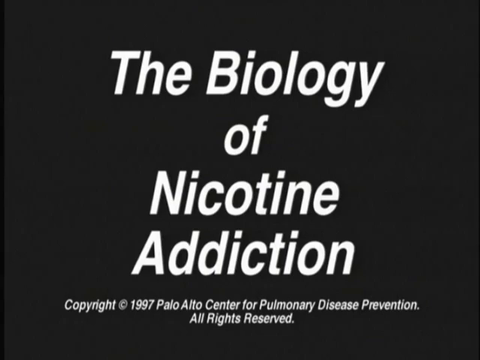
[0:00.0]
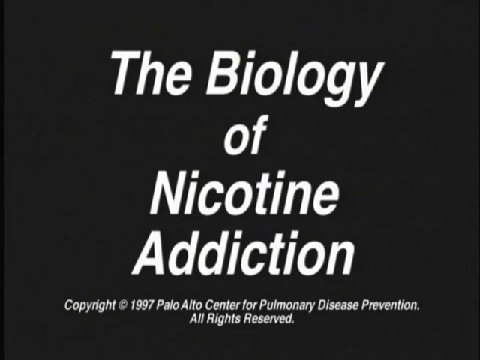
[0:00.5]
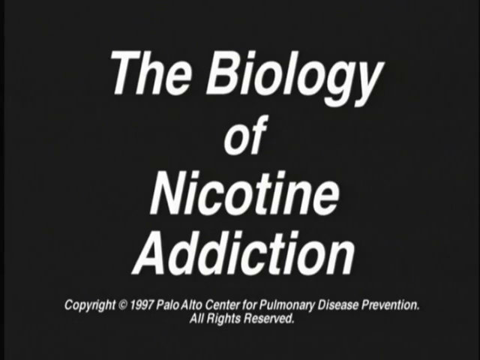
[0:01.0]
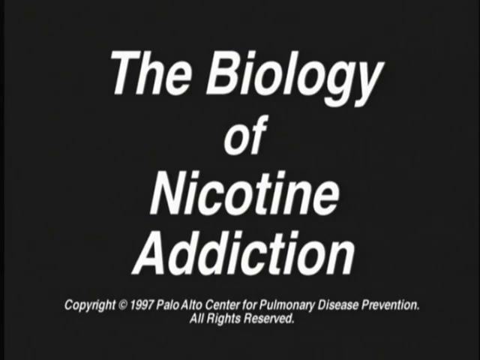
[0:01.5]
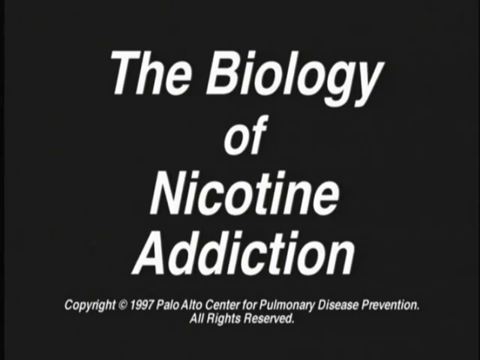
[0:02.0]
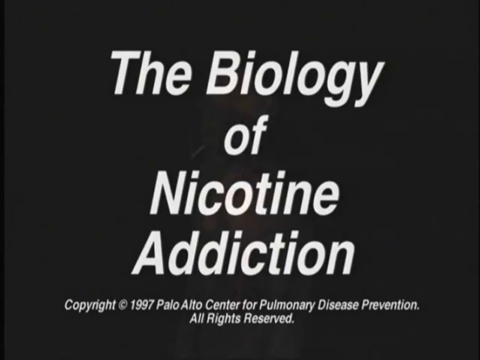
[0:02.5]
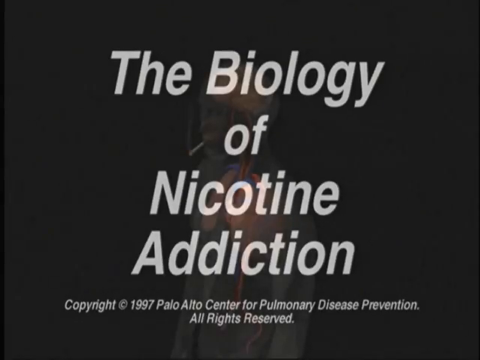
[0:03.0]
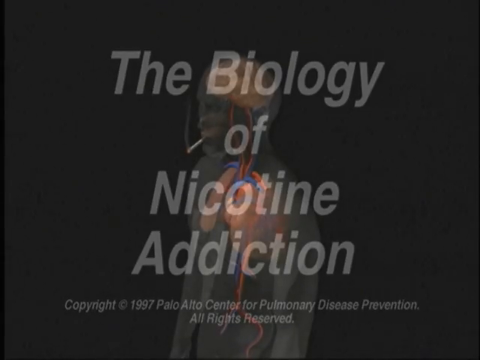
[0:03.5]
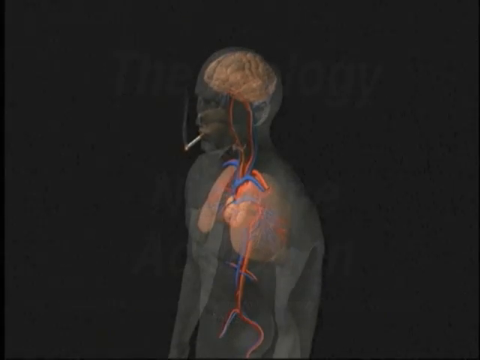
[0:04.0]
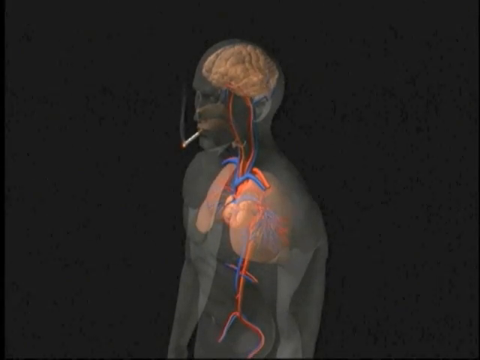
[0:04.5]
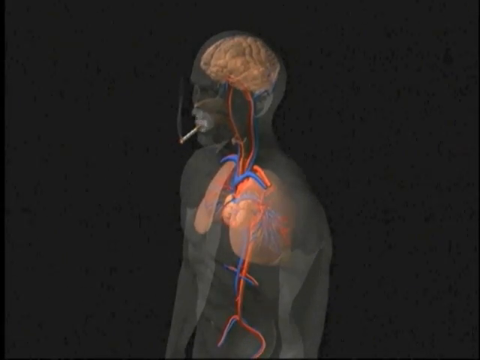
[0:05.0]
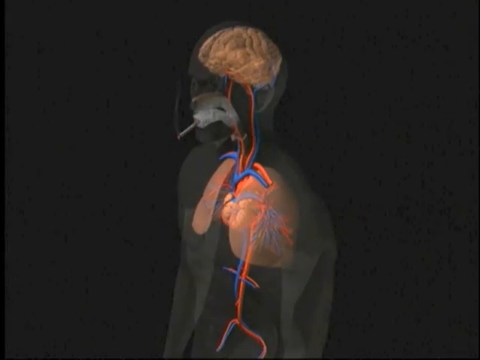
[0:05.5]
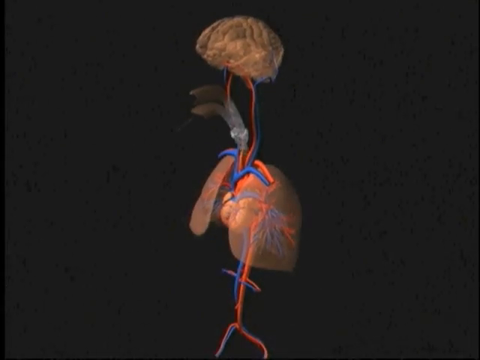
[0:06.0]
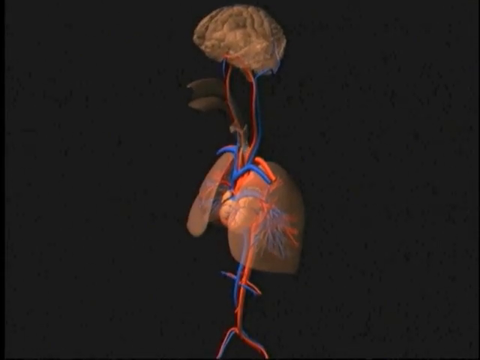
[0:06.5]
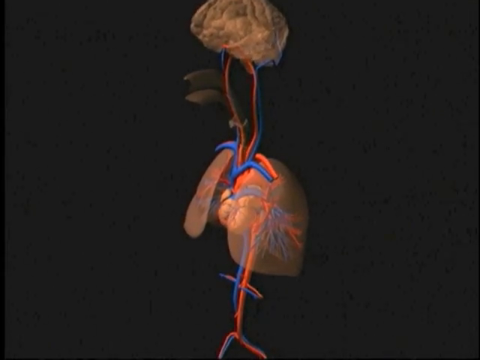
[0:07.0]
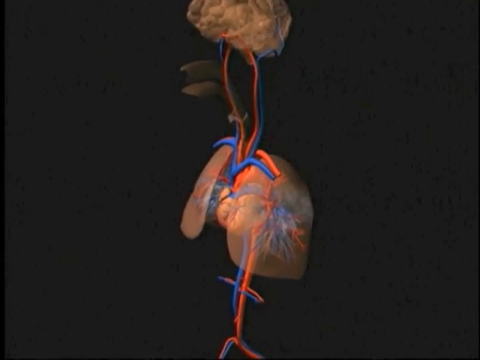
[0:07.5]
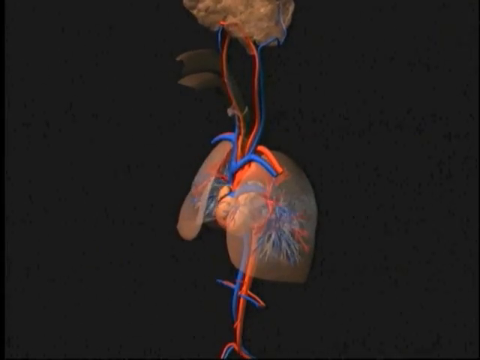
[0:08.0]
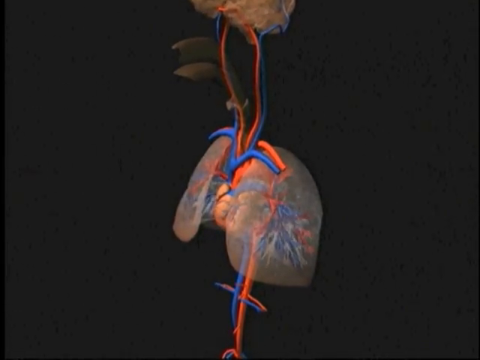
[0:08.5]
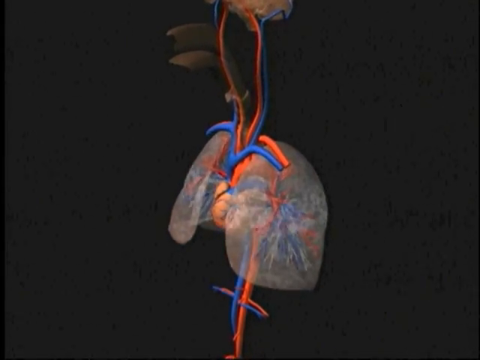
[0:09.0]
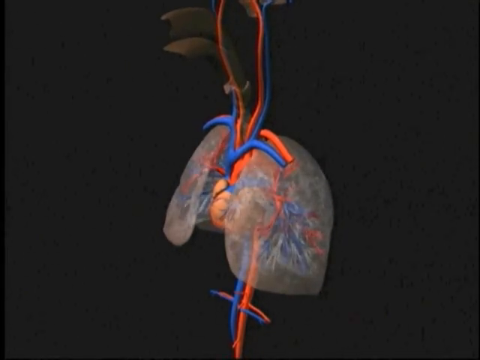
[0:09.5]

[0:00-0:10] An intro appears with the title "the biology of nicotine addiction" along with a copyright notice from 1997. Next comes what looks like a CGI digitally animated demonstration of someone smoking a cigarette. The person's organs are visible, sort of like an x-ray view of a CGI human on a gray background, and the smoke goes down the throat into the lungs and clouds them up, apparently illustrating the effects of nicotine and smoking on the body. The sequence stops right after the smoke fills the lungs.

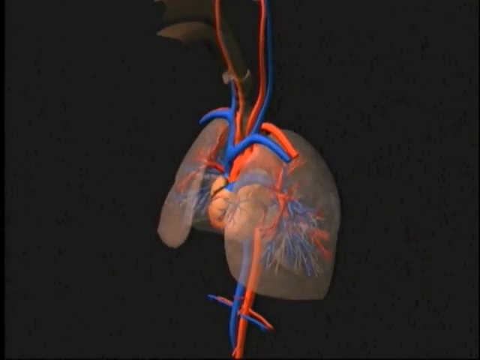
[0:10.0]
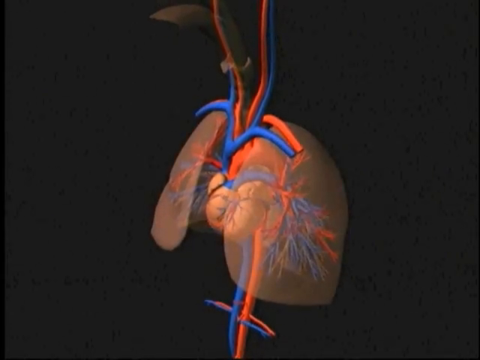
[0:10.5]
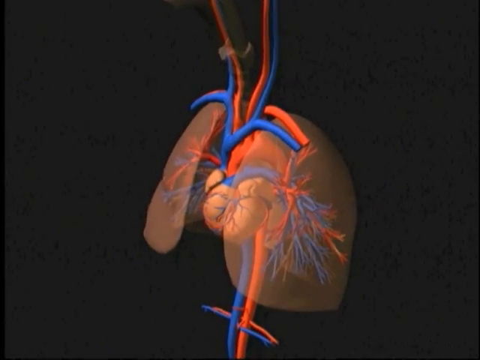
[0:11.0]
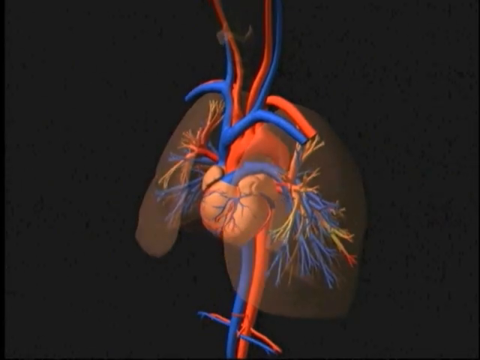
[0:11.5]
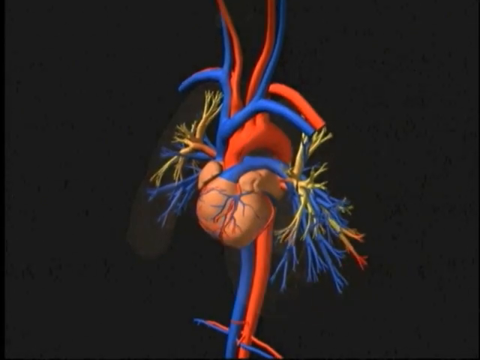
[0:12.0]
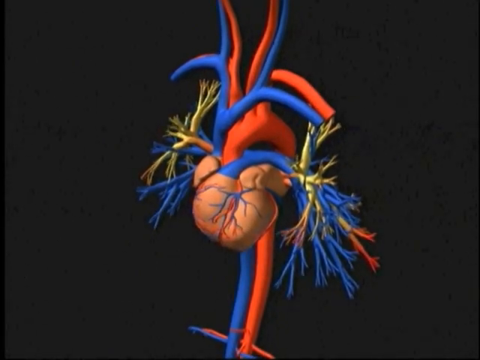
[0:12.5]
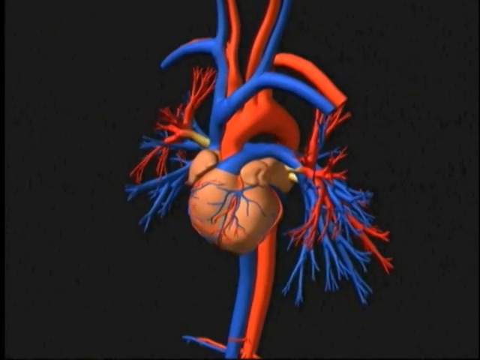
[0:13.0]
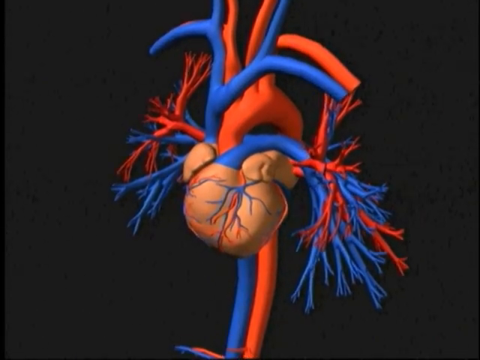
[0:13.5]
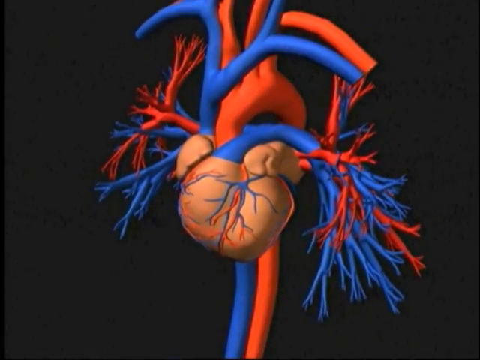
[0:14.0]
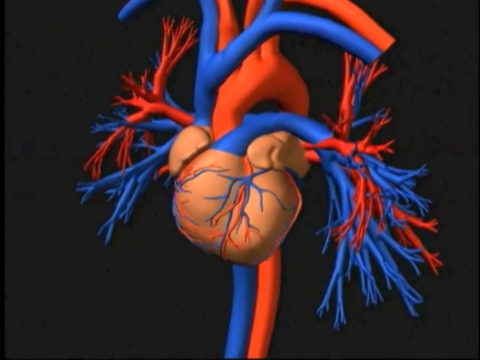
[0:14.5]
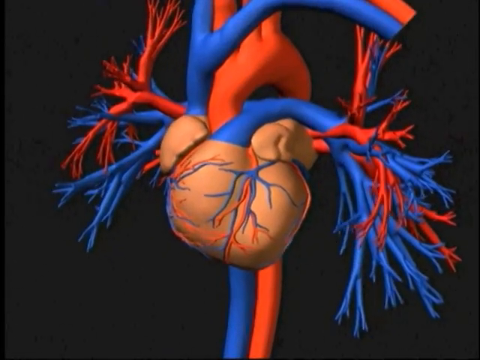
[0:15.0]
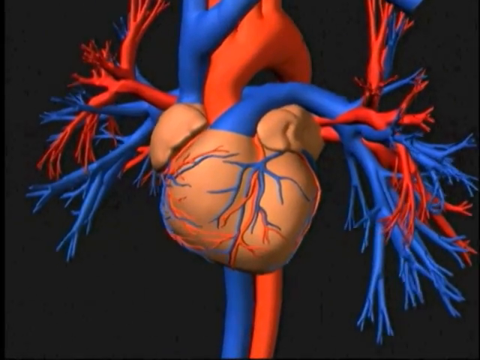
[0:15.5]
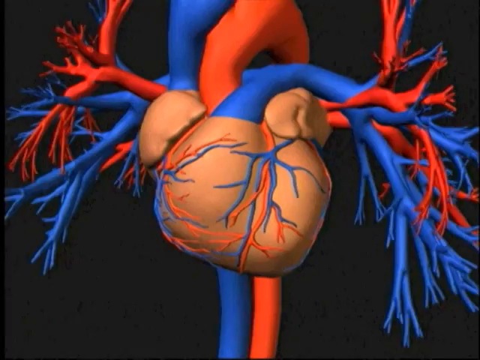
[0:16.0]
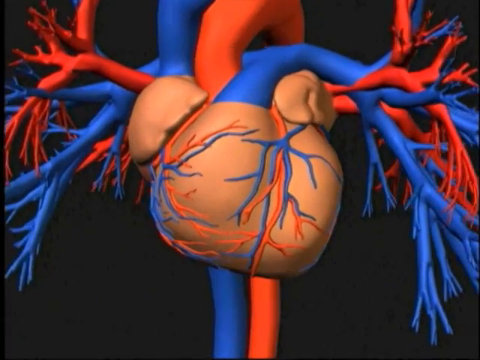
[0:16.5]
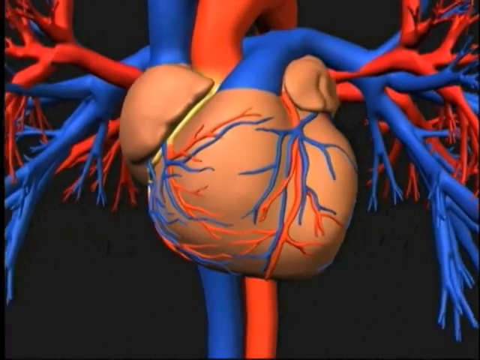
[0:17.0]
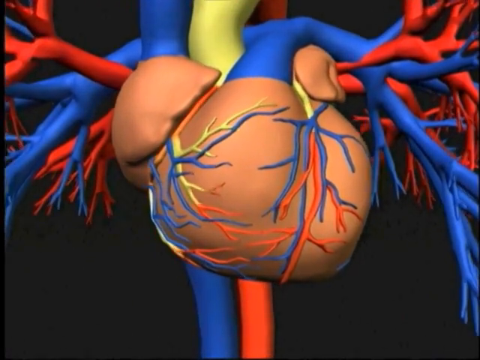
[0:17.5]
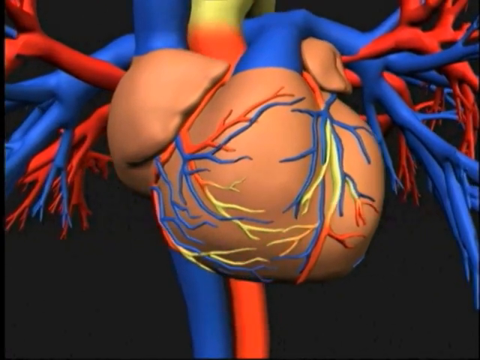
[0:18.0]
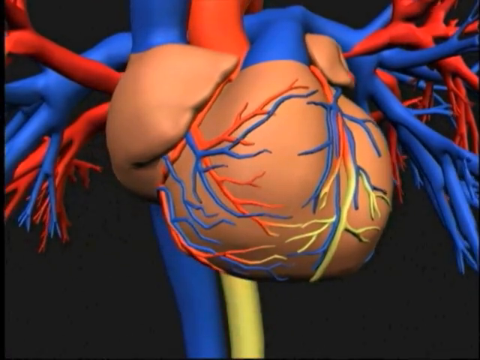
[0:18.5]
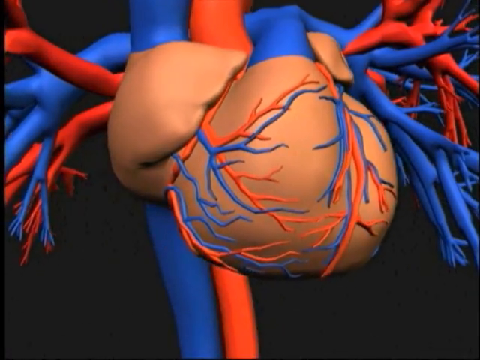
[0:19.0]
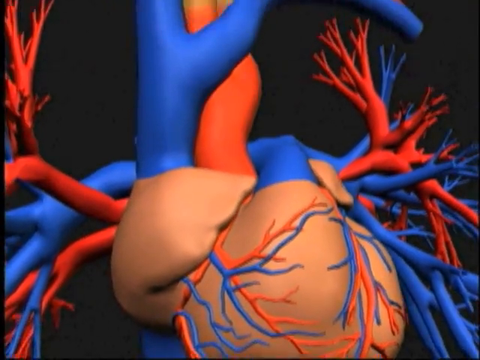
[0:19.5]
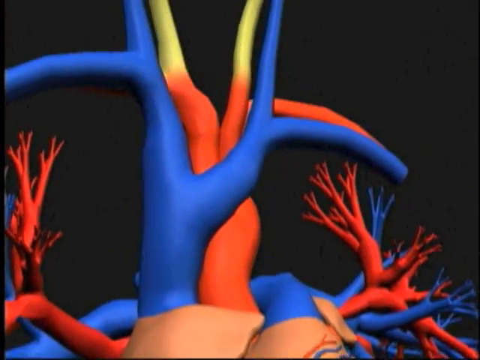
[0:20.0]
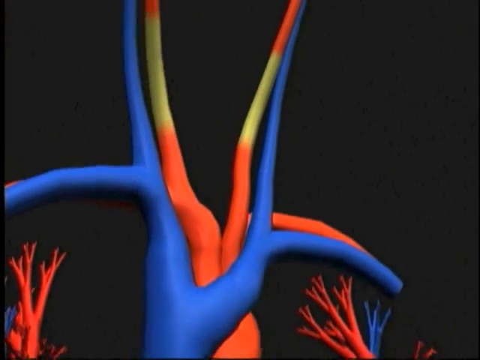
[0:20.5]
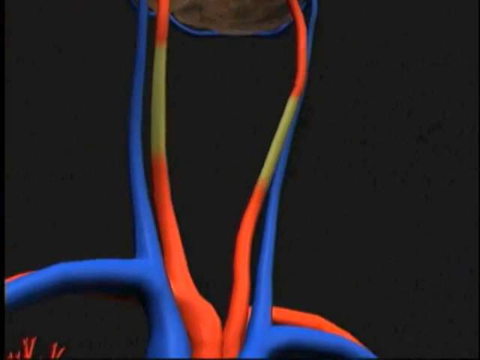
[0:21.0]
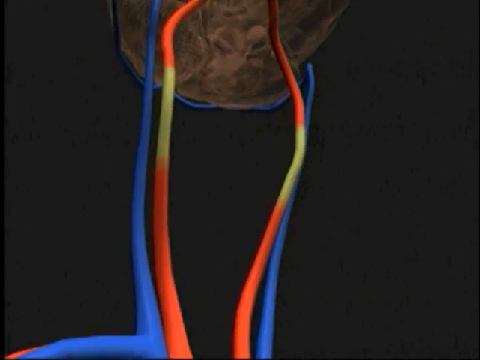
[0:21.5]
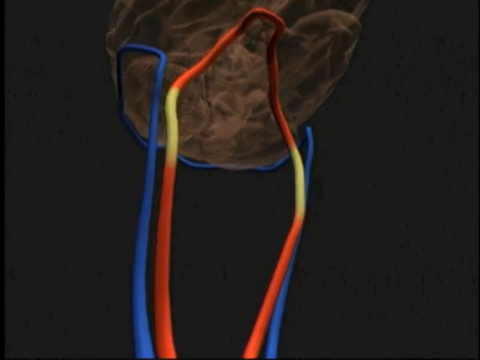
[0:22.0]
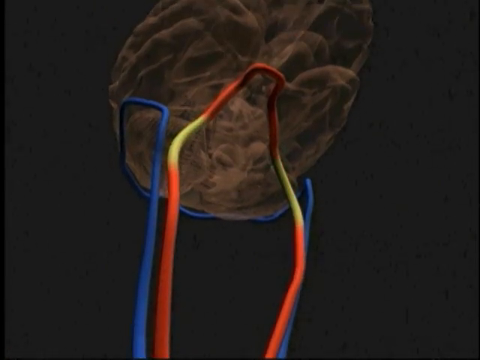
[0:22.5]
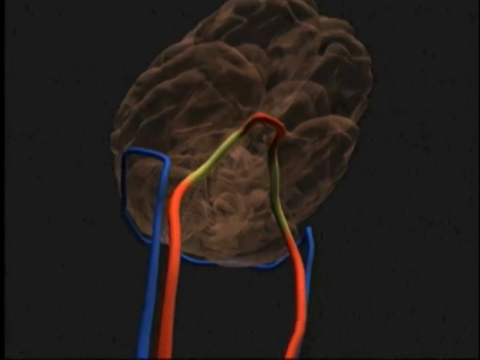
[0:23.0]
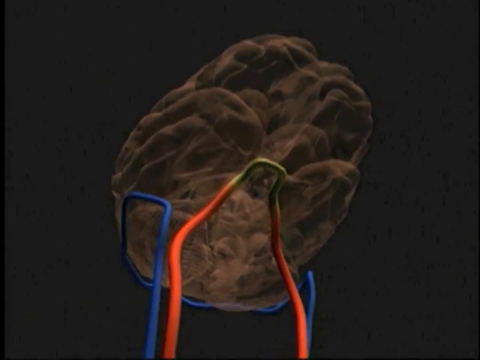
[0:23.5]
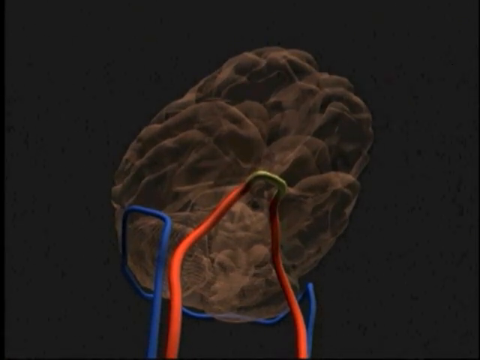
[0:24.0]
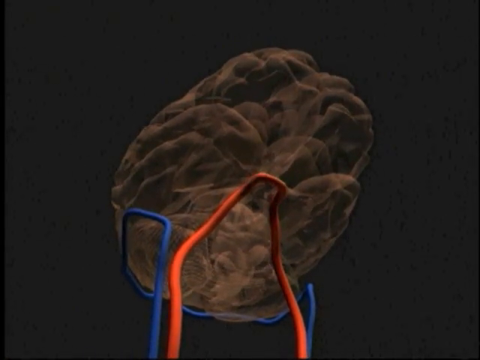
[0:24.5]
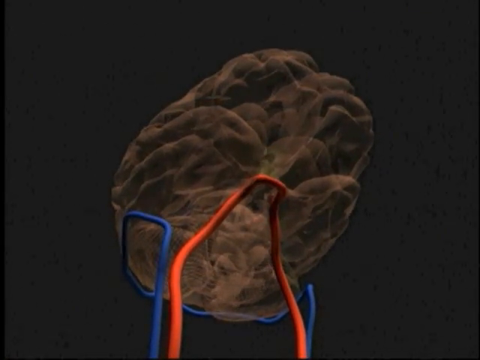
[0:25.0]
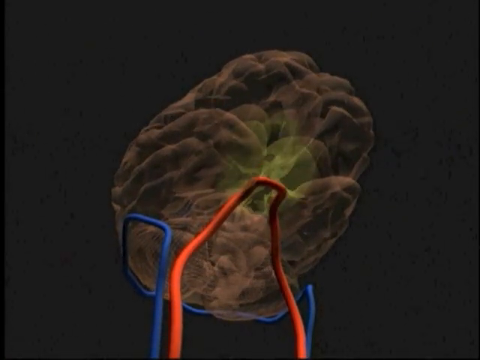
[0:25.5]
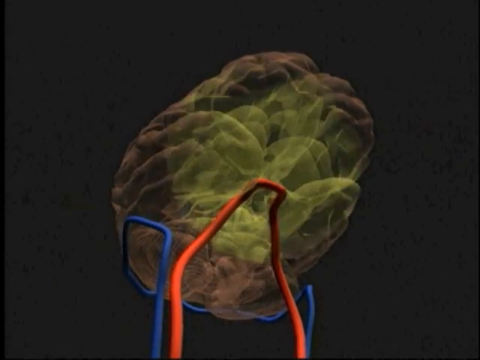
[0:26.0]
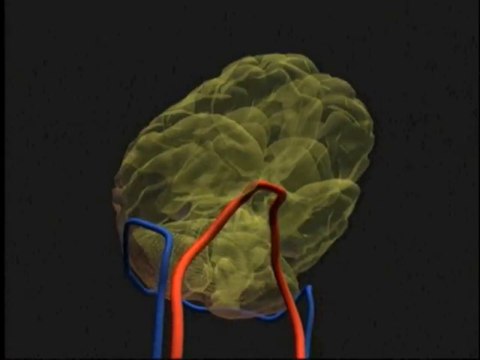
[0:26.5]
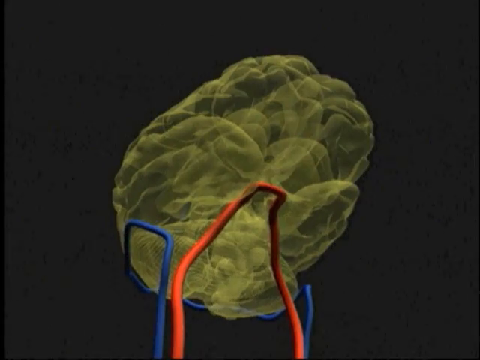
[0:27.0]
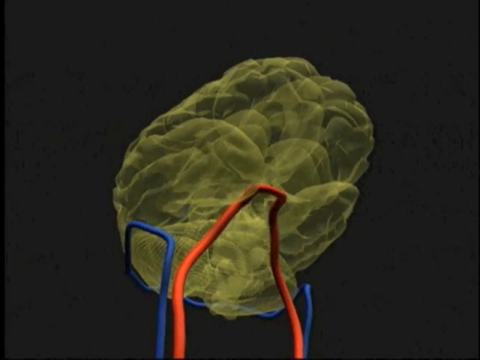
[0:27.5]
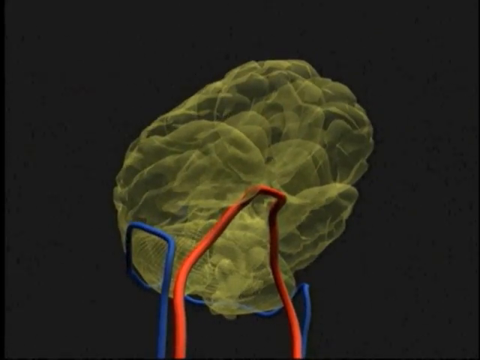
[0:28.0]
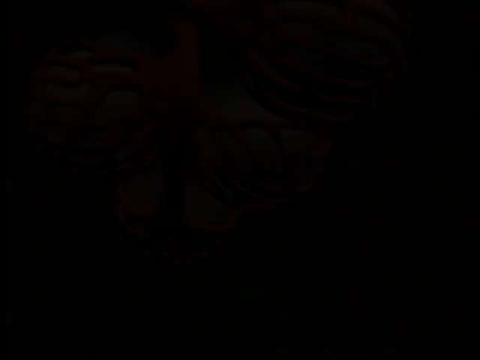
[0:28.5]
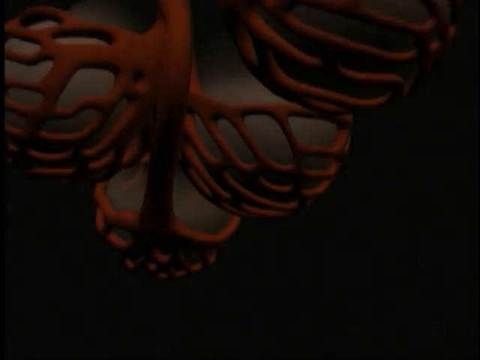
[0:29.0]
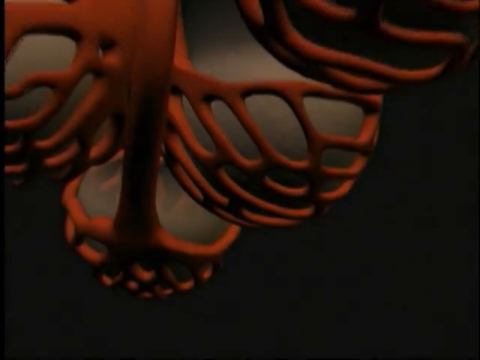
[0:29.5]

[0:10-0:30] The view moves closer to the lungs, showing what look like the nerves in the lungs, and continues closer into the internal organs, showing what looks like the heart. The veins turn into yellow lines, as if something is moving through the body. The view then pans up to the CGI brain, which starts turning yellow. It apparently goes even closer, and molecules become visible; this is possibly the inside of the brain, with the yellow filling the entire brain until it becomes overcrowded. The scene then transforms to another part of the body that is hard to identify.